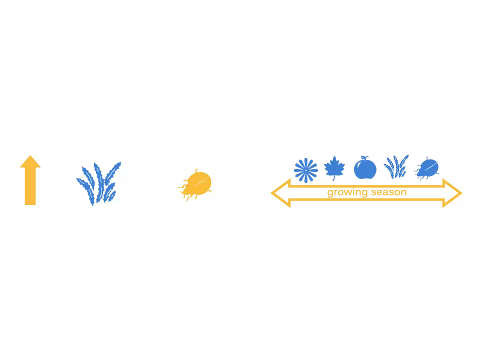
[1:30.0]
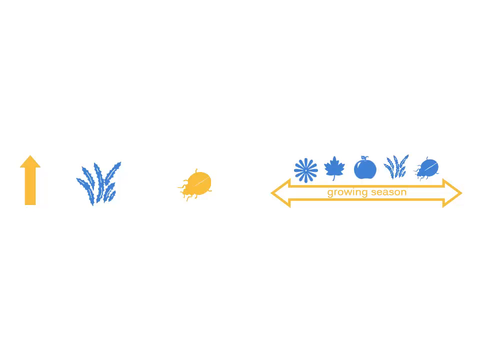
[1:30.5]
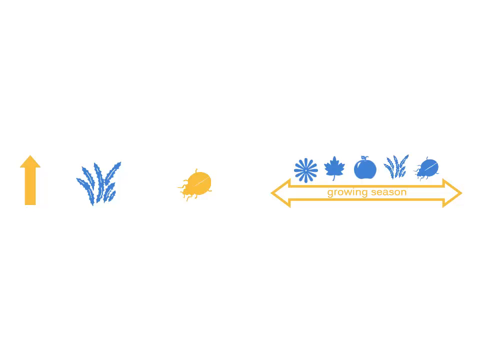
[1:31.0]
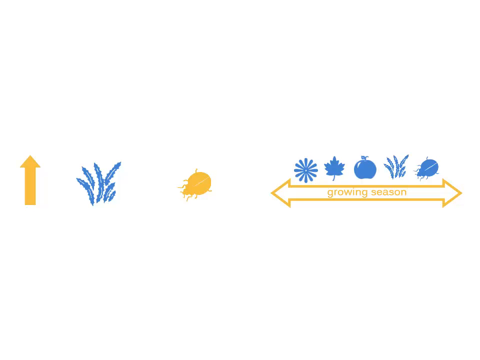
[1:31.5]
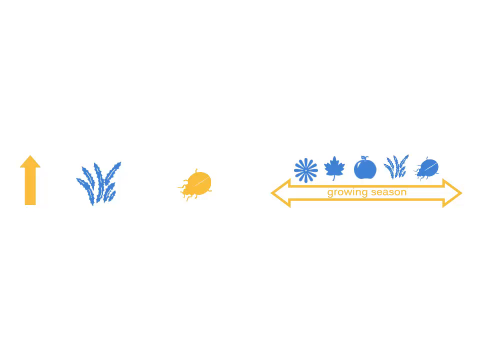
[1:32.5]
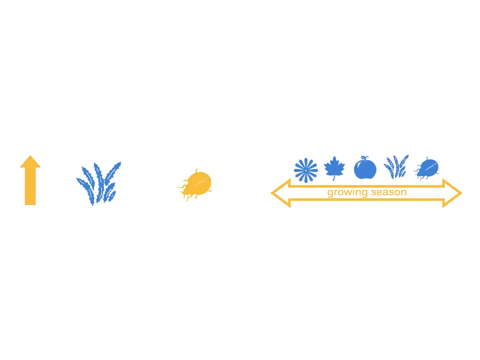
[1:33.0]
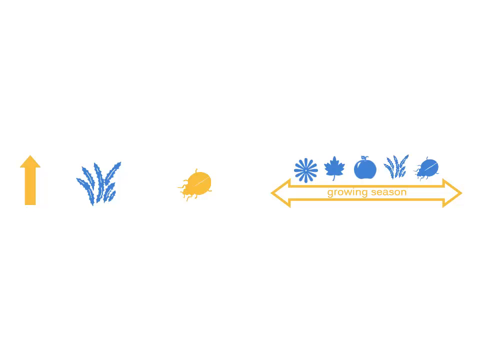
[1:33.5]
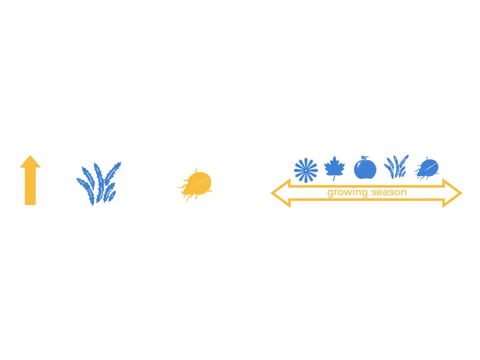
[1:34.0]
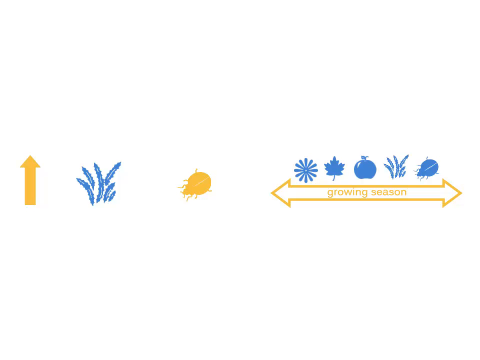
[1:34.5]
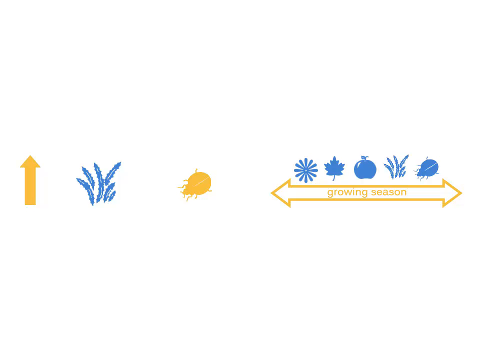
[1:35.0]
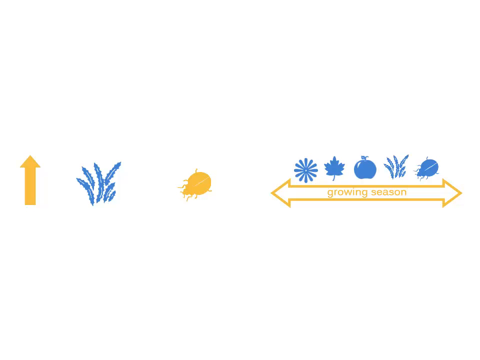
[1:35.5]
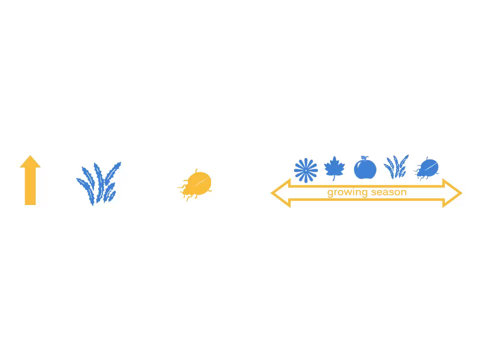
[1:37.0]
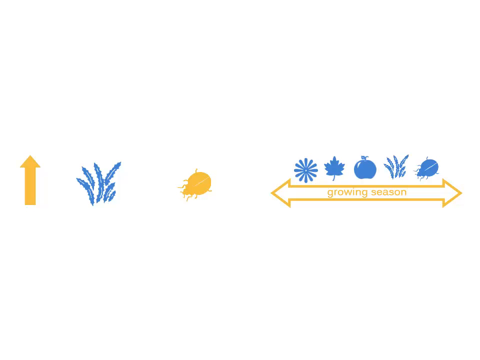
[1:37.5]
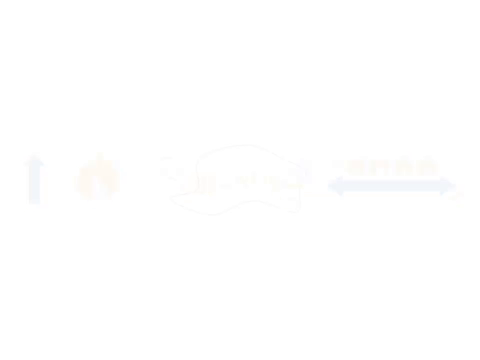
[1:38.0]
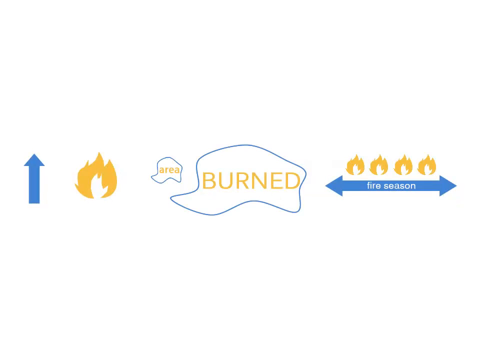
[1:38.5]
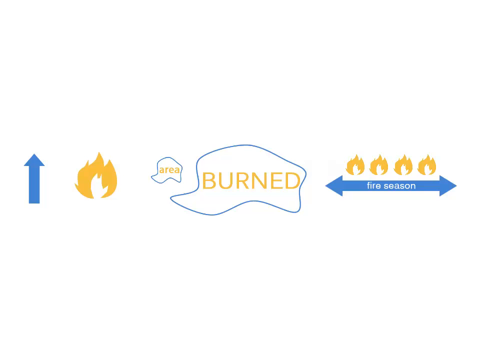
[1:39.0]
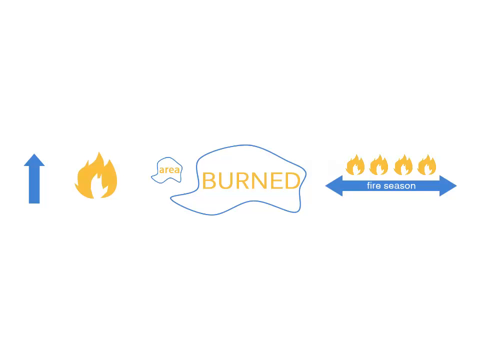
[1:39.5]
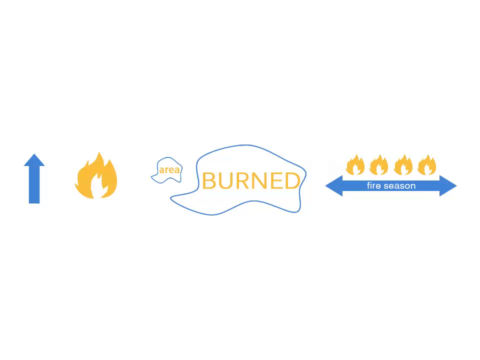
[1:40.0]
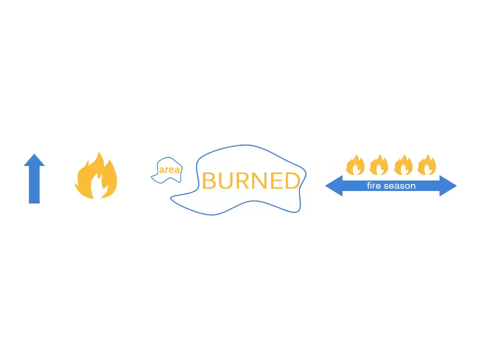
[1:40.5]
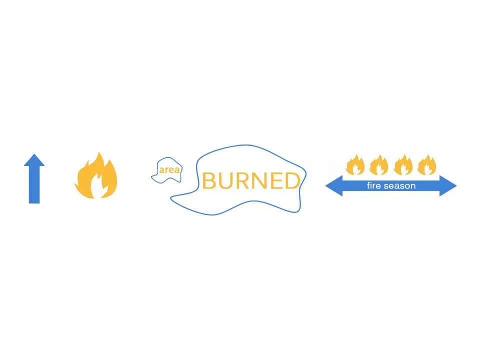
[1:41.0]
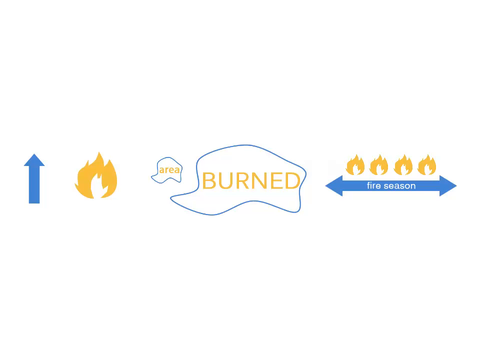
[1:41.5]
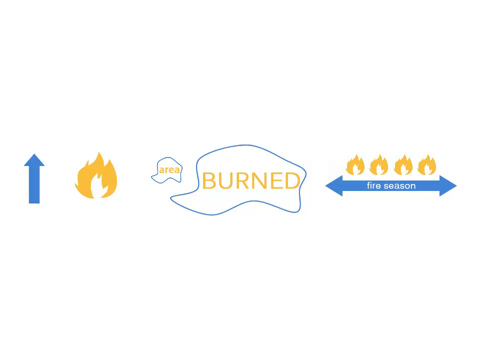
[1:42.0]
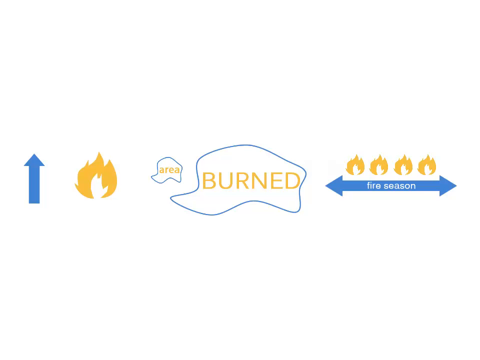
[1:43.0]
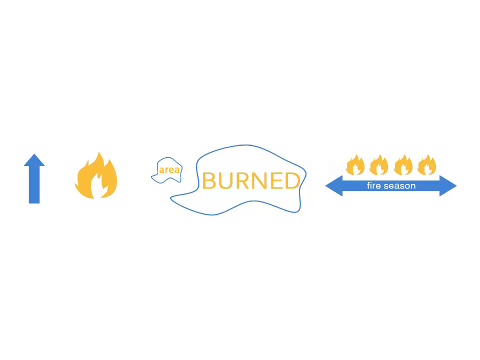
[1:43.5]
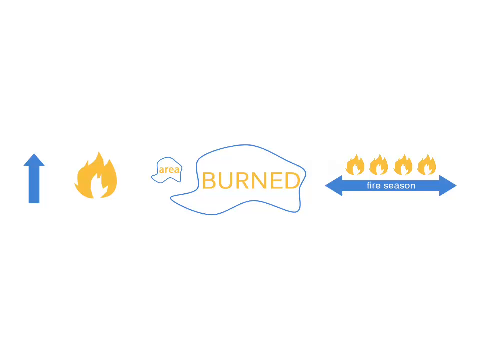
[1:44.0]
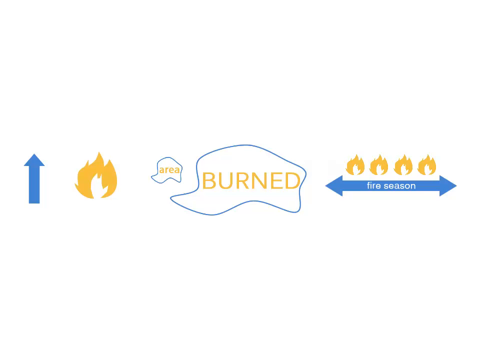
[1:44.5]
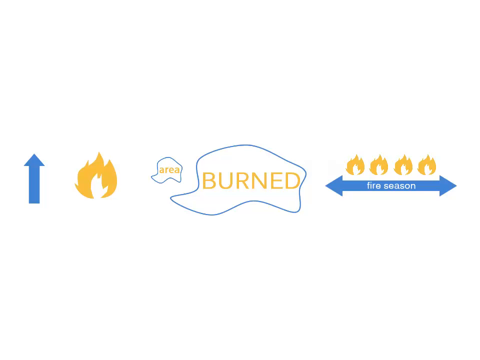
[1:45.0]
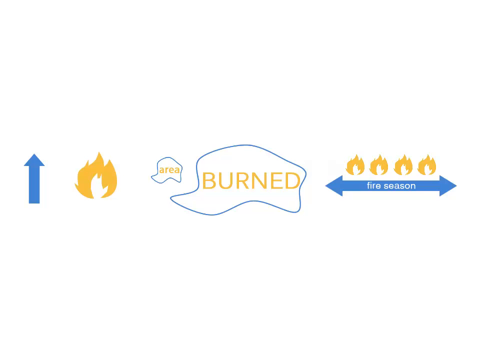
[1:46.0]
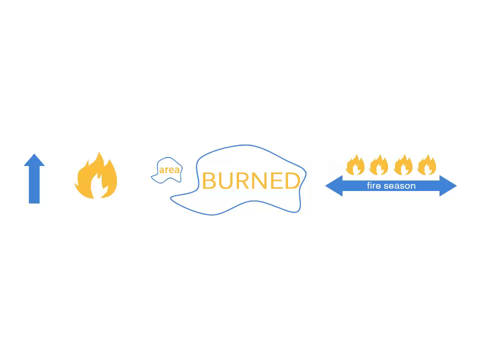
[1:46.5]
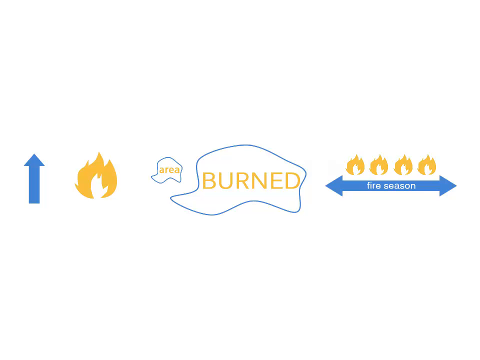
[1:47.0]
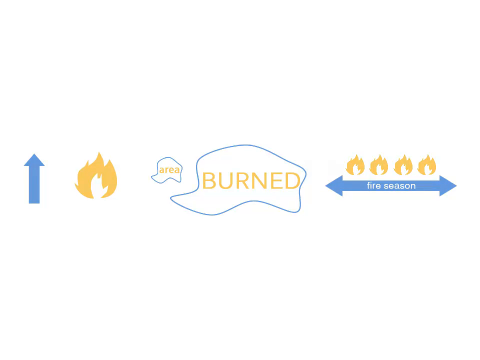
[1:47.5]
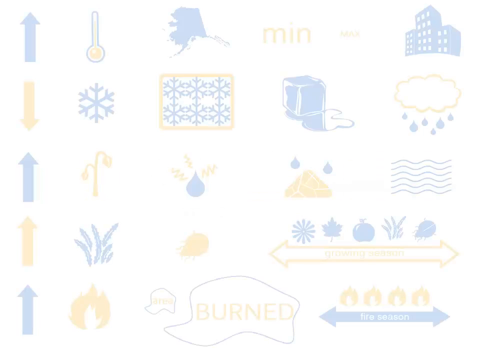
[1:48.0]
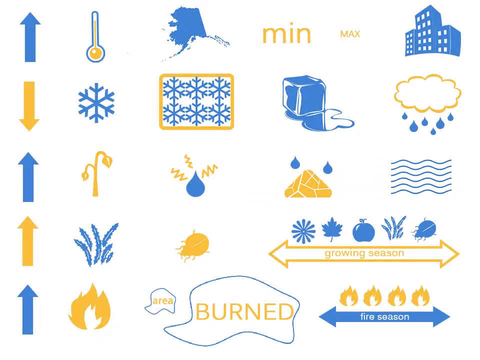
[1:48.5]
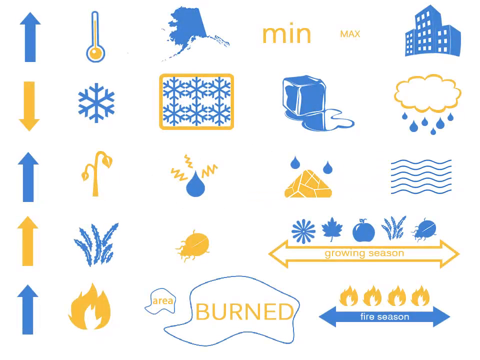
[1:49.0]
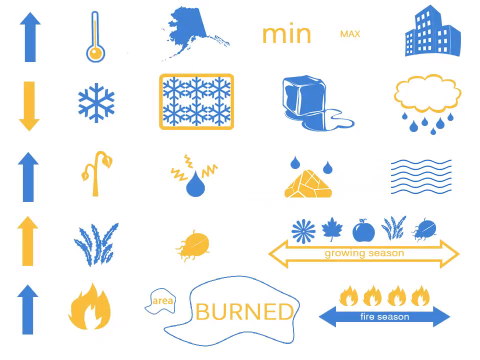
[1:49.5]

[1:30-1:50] The white background page shows icons across the centre, left to right: an upward-pointing orange arrow, a spiky blue bush or plant, an orange ladybird beetle pointing down, and furthest along a horizontal arrow with points at either end, a white centre and orange outline, containing the words "growing season". In a row above the arrow are five blue icons: a flower, a maple leaf, an apple, a spiky plant or bush, and a ladybird beetle. The page then changes to another white background with a new set of icons across the centre. First on the left is an upward-pointing blue arrow. To its right is an orange flame icon with a white flame centre. Next is a small blue outline, a little like a peaked hat, with a white centre and the word "area" in orange in the middle. A little further along is the same shape, larger, with a blue outline and white background, reading "burned" in the centre, its peak pointing off to the left. The last icon is a filled-in blue arrow with points at either side and the white words "fire season", with four of the orange flame icons with white centres above it. The video remains on this page for some seconds, then changes to a white background showing all the previous pages of icons as rows from top to bottom. The top row has the blue upward arrow, the thermometer or barometer, the image of Alaska, Min, Max and the group of buildings. The second row has the downward-facing orange arrow, the blue snowflake, the two rows of three snowflakes in the rectangle, the melting ice cube and the cloud with raindrops. The third row has the upward-pointing arrow, the orange plant with two leaf tips, the raindrop with spiky lines, the orange triangle with two raindrops above it, and the group of six waves one on top of the other. The fourth row has the orange upward arrow, the spiky bush, the orange ladybird beetle, and the growing season arrow with the flower, leaf, apple, spiky bush and ladybird above it. The final row has the upward-pointing blue arrow, the flame icon, the hat-like area burned icons, and the blue fire season arrow with the four fire icons above it.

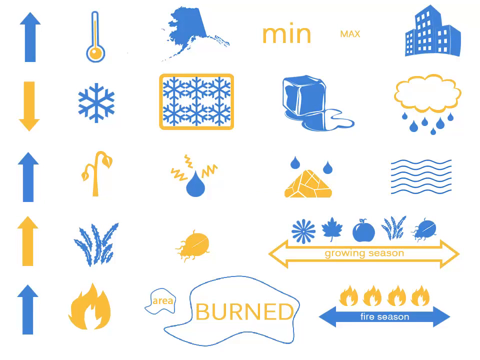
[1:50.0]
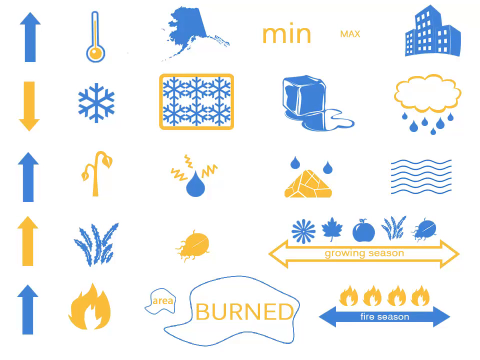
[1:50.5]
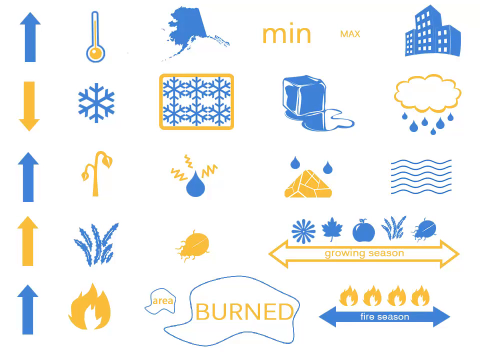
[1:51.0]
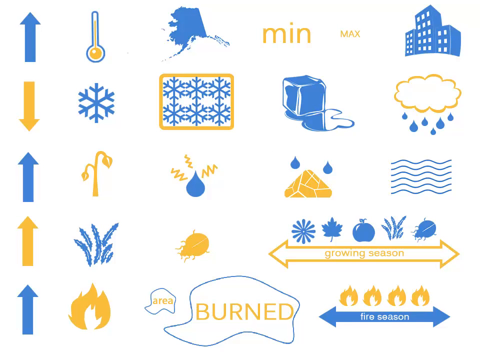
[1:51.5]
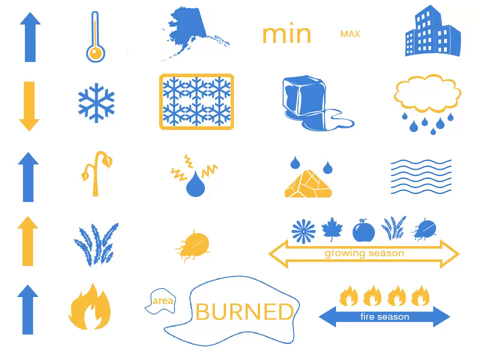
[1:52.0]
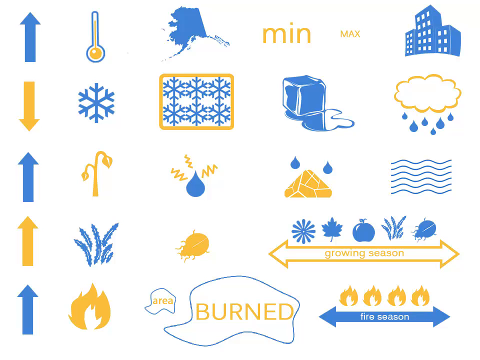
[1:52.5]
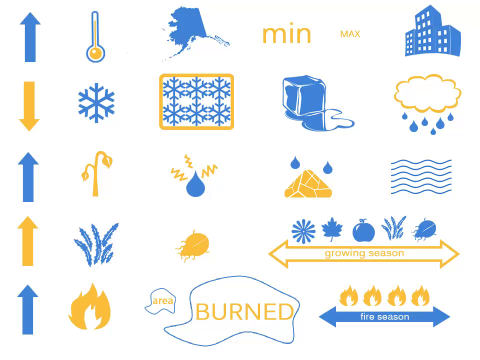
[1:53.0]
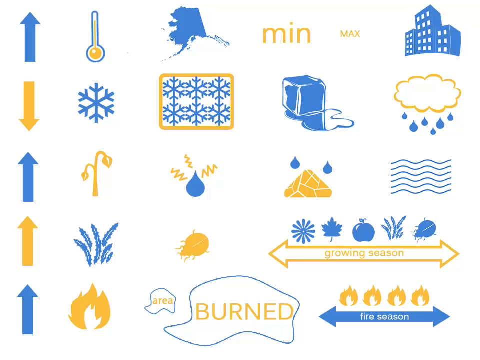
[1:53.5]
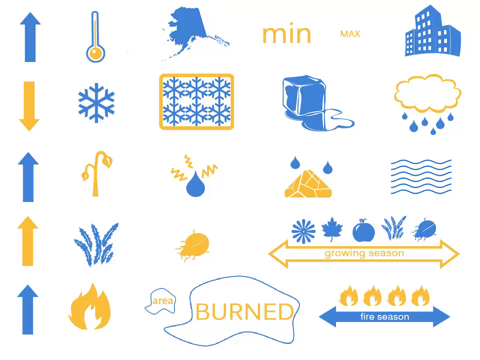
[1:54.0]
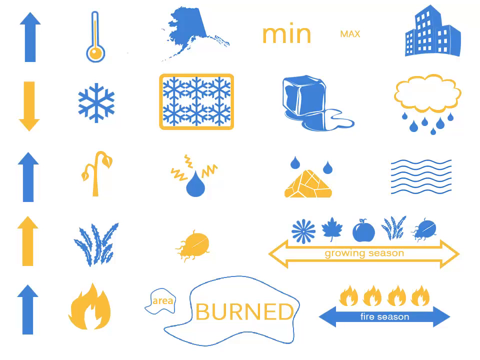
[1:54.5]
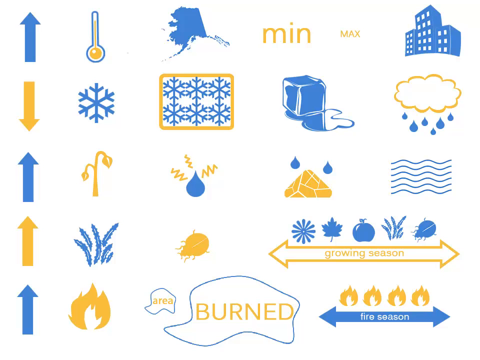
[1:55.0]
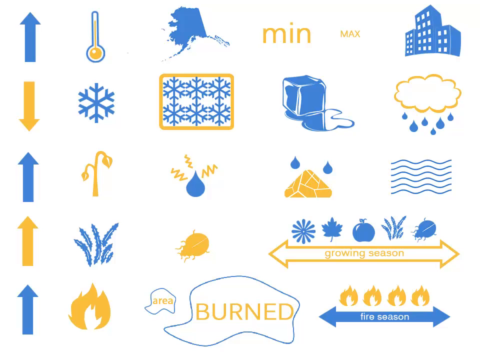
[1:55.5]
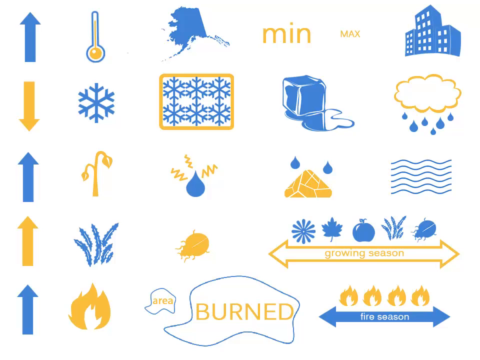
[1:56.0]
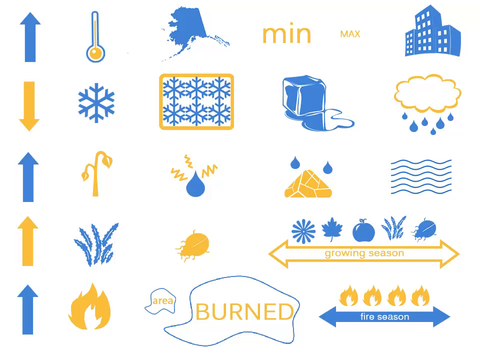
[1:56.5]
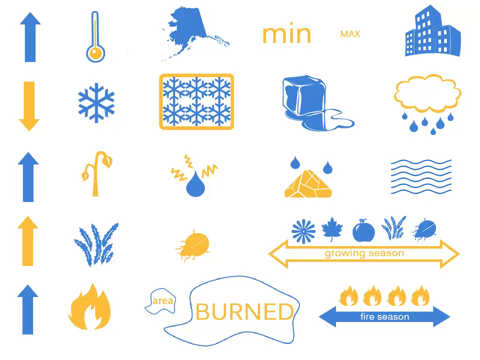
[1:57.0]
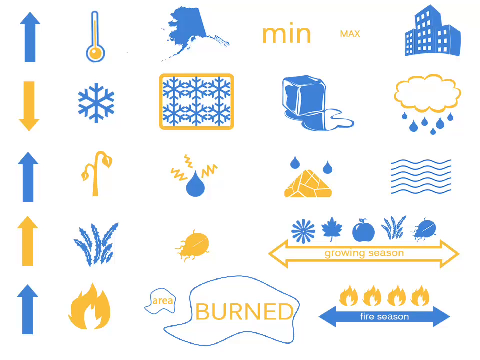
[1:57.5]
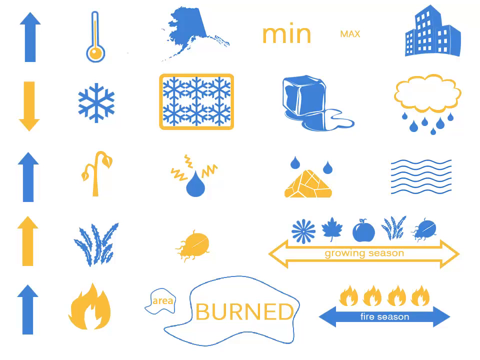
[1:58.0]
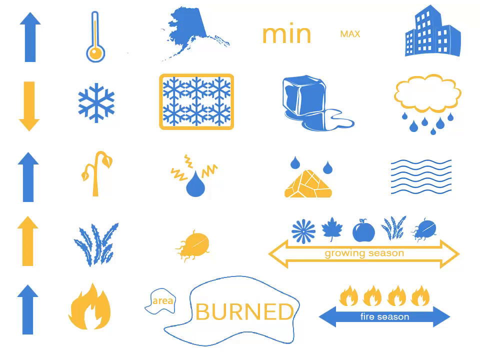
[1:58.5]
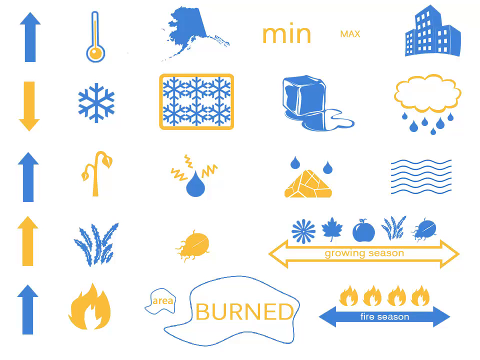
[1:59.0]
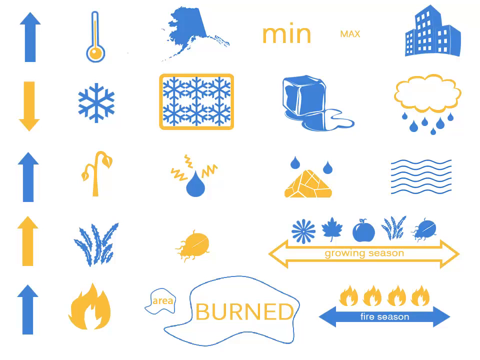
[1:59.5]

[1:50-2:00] A white background page shows a summary of all the icons in rows. The top row has the blue arrow, thermometer, Alaska, Min, Max and buildings. The second row has the downward-pointing arrow, snowflake, group of snowflakes, melting ice cube and cloud with raindrops. The third row has the upward-pointing blue arrow, orange shoot with two leaf tips, spiky raindrop, triangle with two raindrops, and the group of six wavy lines above one another. The fourth row has the upward-pointing orange arrow, spiky plant, orange ladybird beetle, and the growing season arrow with blue icons of a flower, leaf, apple, spiky plant and ladybird. The final row has the upward-pointing blue arrow, flame icon, area burned icon, and the blue fire season arrow with four orange flame icons above it. The video remains on this page for some seconds.